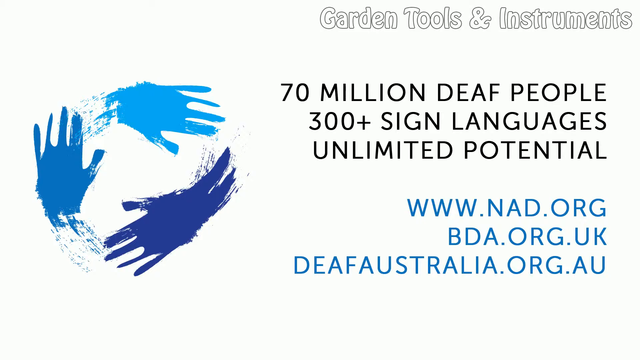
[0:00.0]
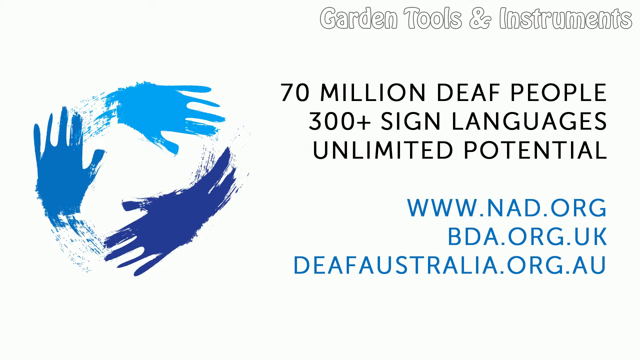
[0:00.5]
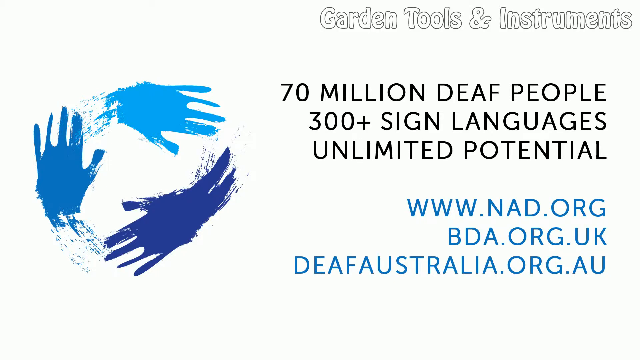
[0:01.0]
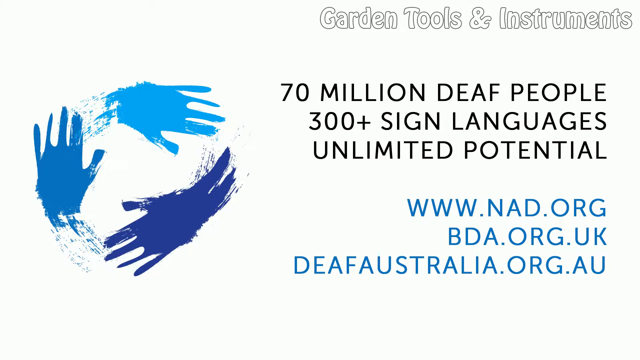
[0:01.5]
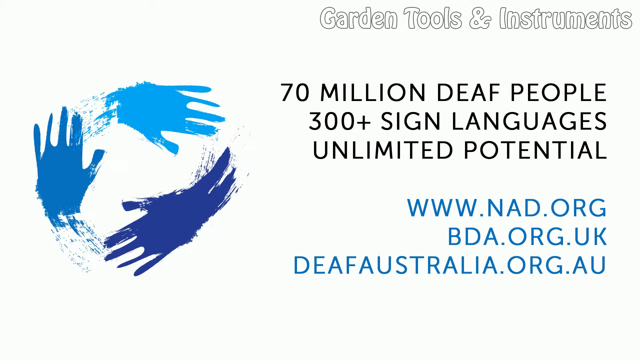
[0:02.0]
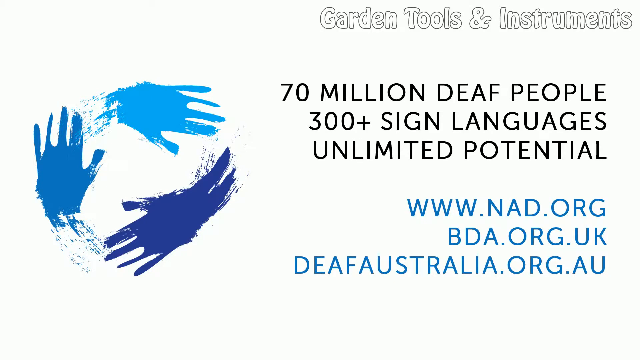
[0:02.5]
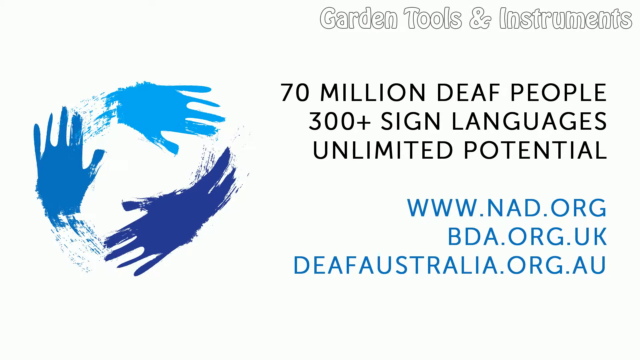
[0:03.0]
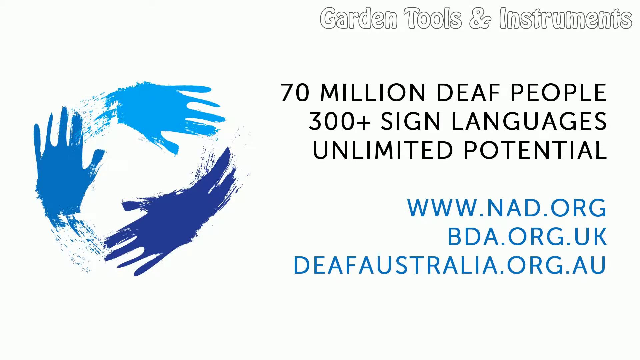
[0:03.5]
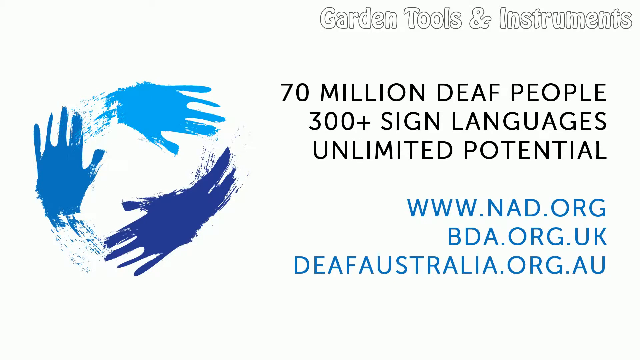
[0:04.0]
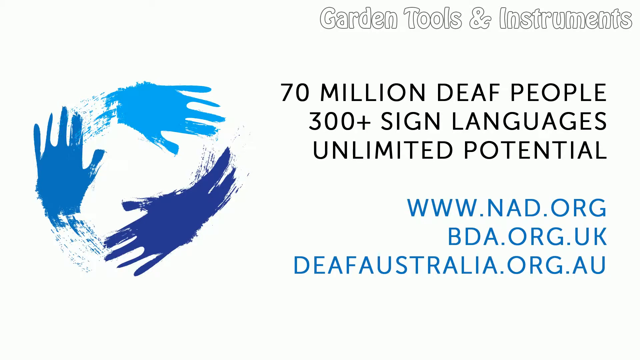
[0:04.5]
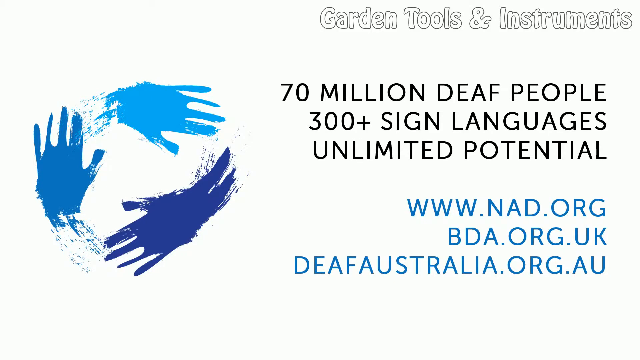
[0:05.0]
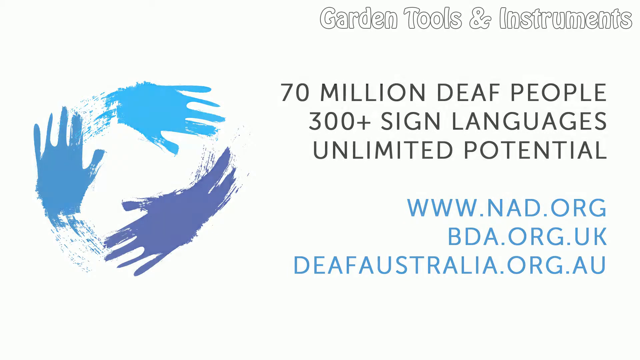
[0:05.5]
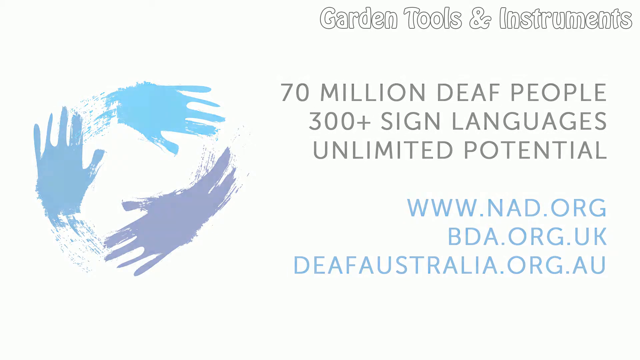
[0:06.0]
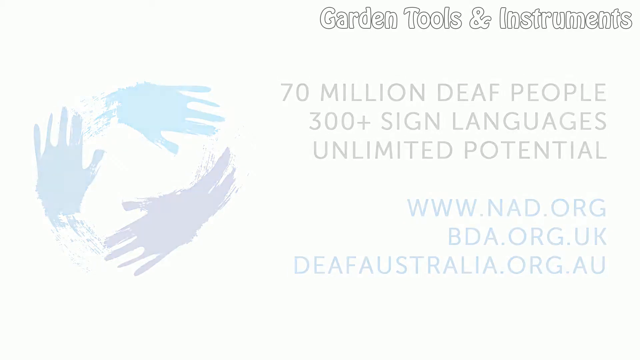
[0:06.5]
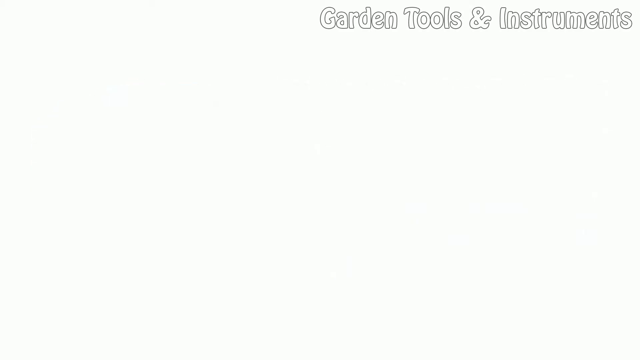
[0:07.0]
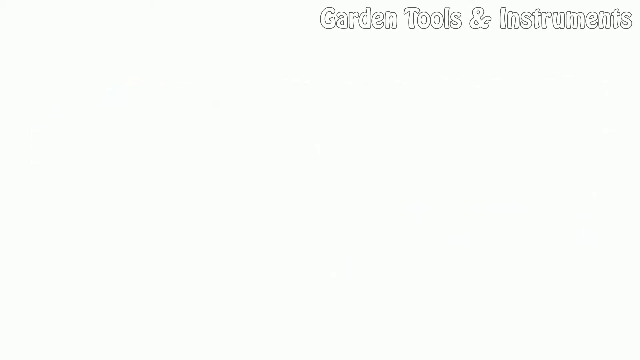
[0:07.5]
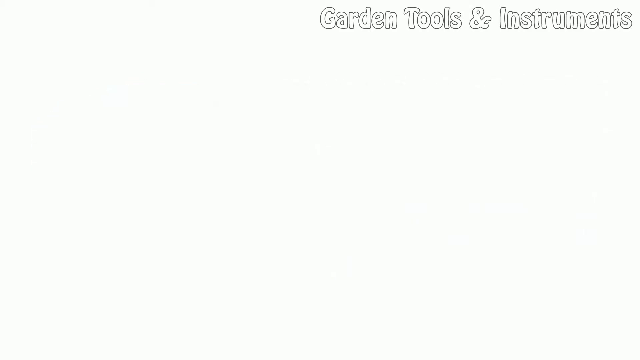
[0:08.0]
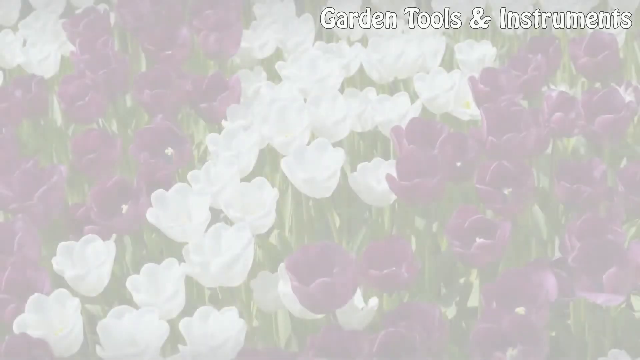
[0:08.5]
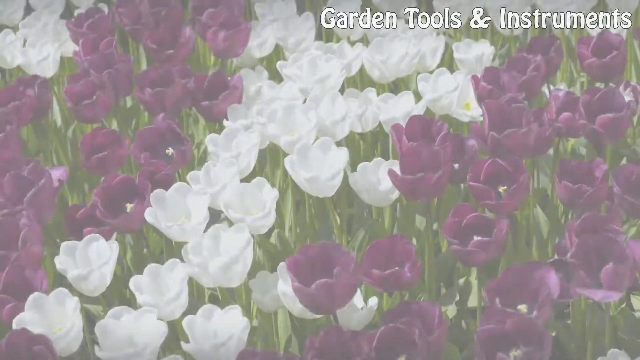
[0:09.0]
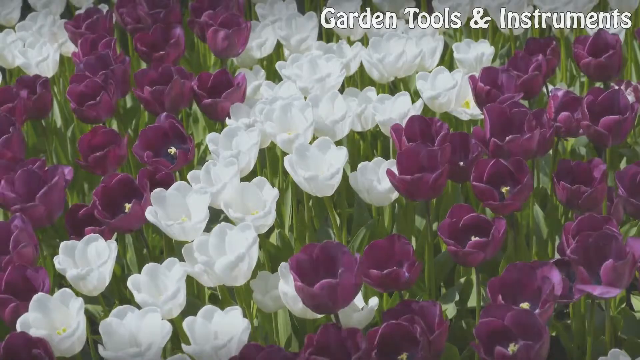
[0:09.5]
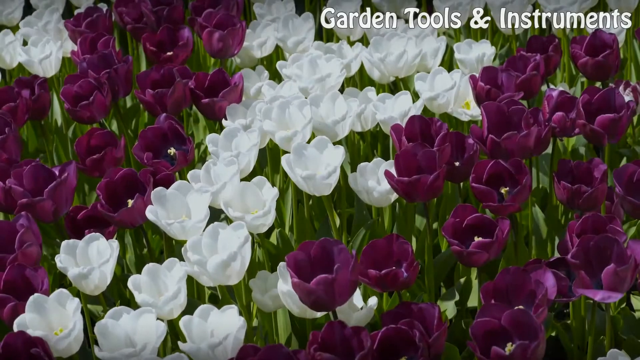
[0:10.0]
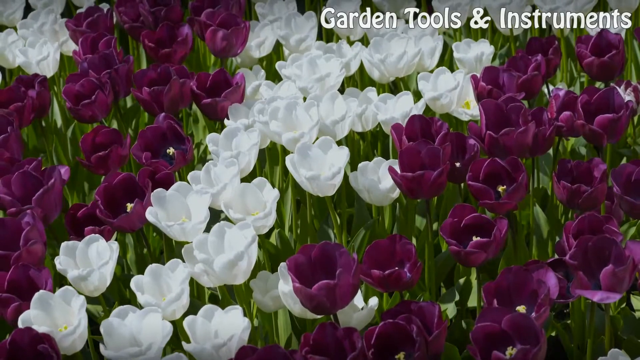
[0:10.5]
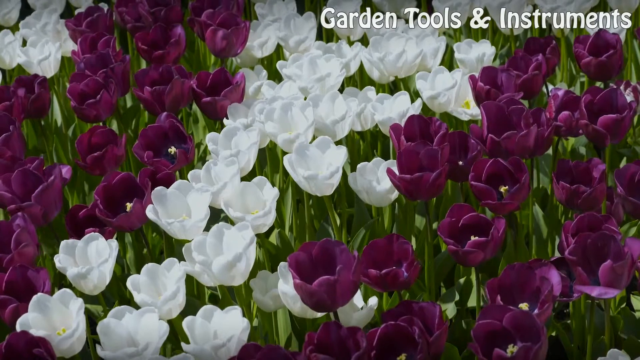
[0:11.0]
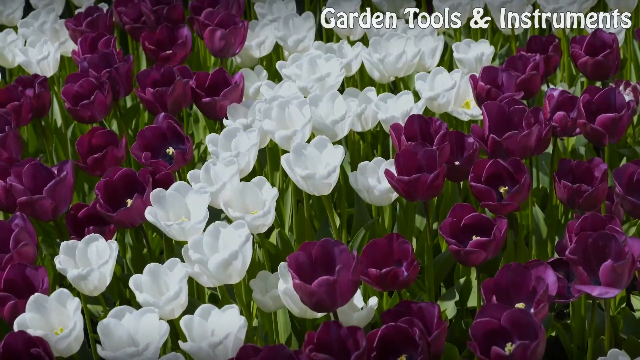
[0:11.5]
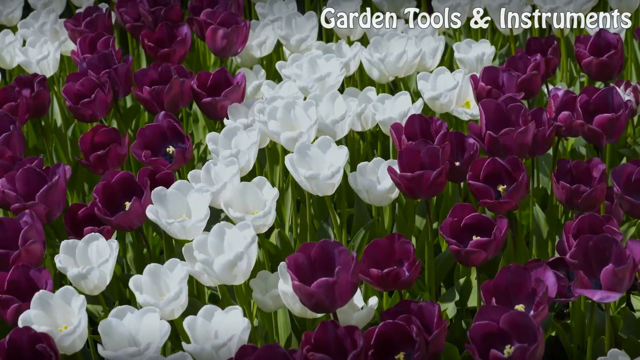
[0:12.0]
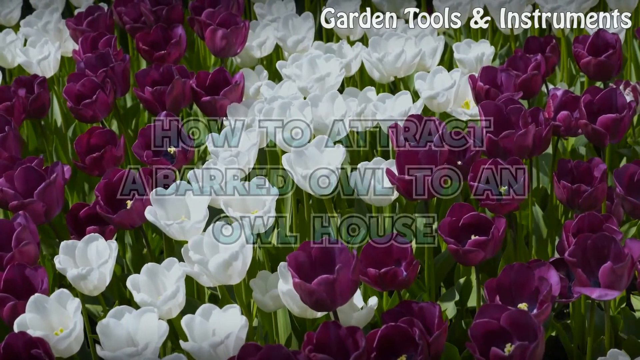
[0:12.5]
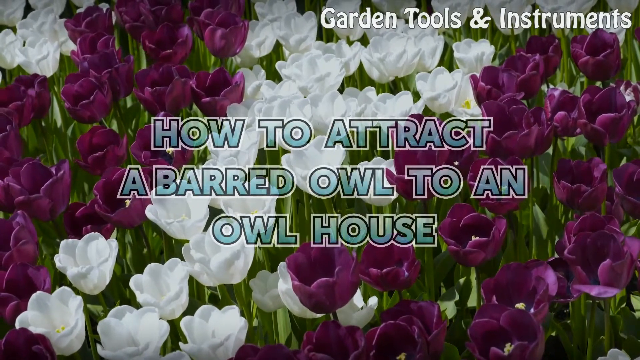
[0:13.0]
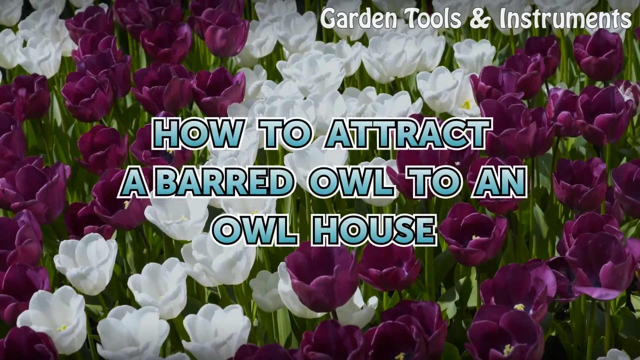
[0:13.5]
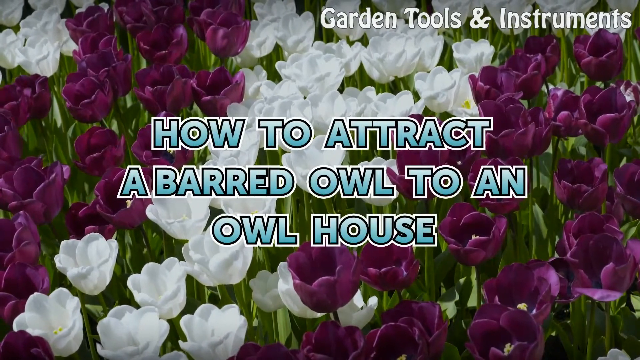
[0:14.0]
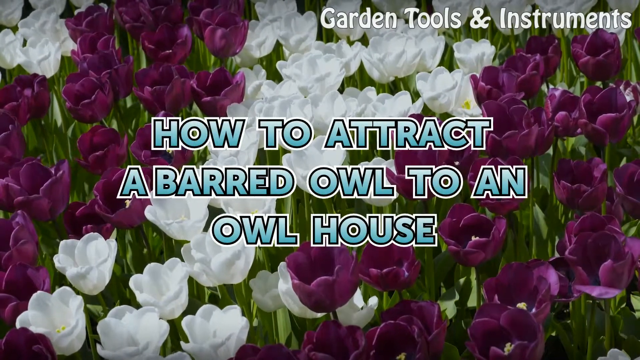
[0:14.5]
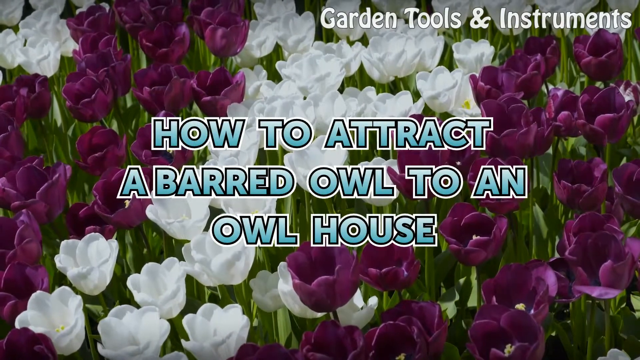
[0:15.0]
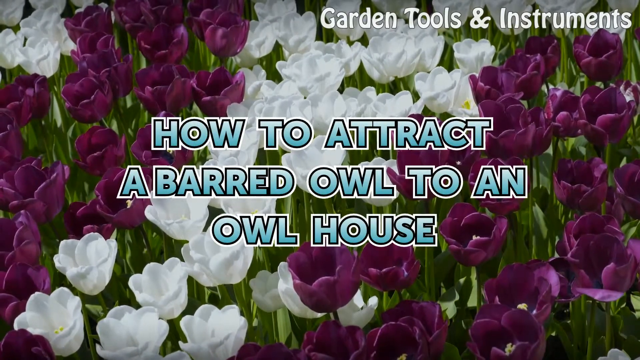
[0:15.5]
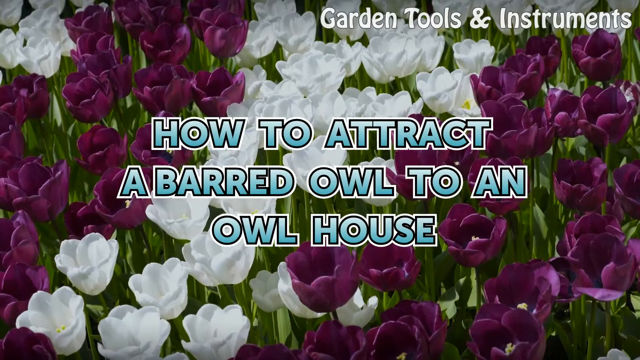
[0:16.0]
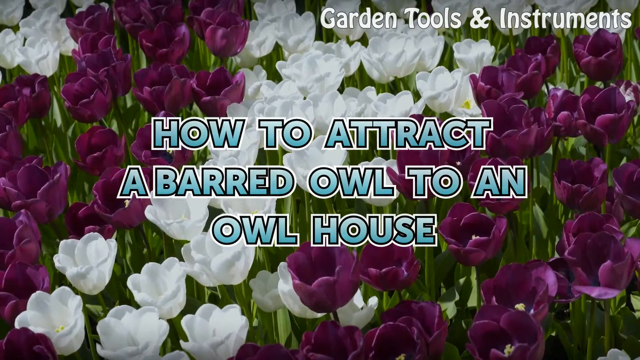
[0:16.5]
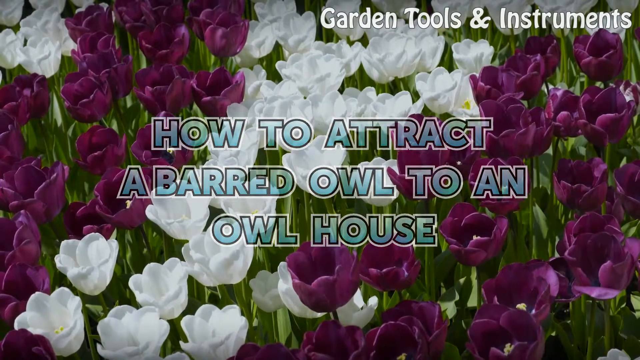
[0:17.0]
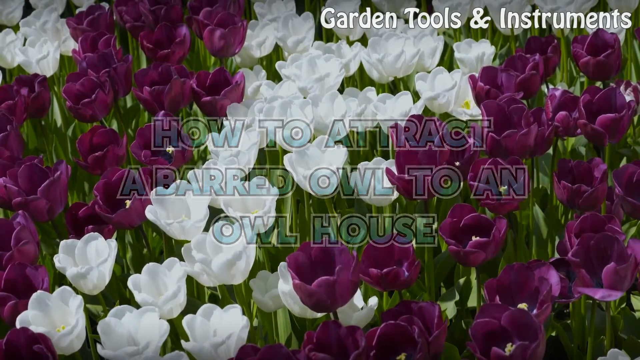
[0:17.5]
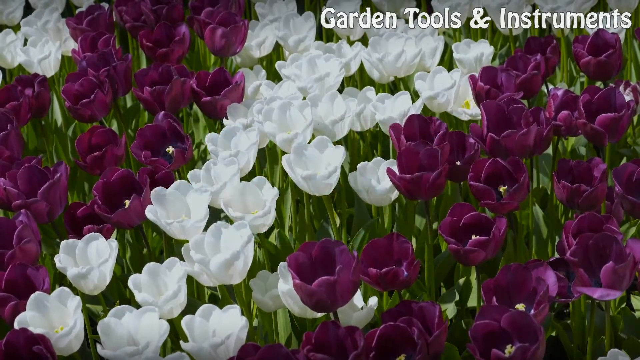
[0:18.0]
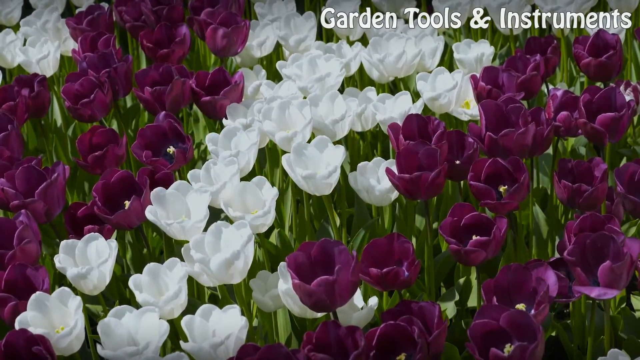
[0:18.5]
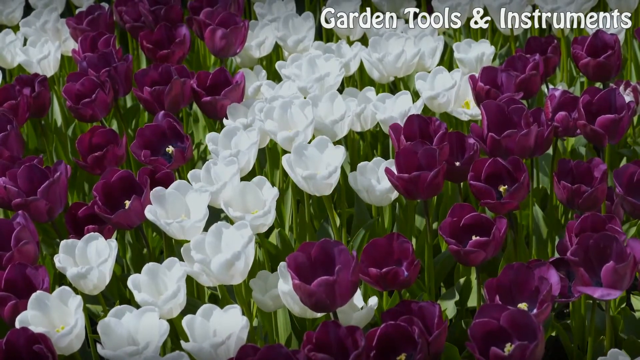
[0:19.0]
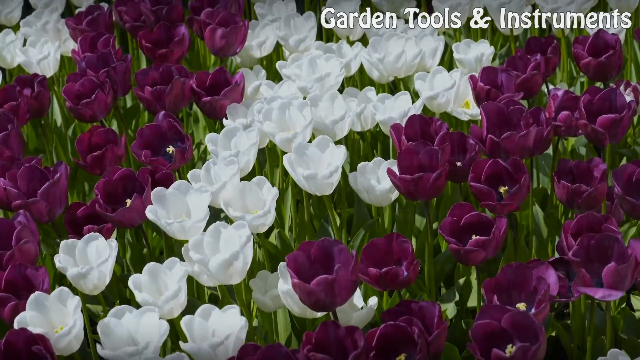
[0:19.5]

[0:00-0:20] The video opens on a white background with "garden tools and instruments" written in white bubble letters in the top right corner. On the left side of the screen are three hand prints that look like they were dipped in paint, in different shades of blue, going around in a circle. To the right of them, black text reads "70 million deaf people, 300+ sign languages, unlimited potential." Underneath, blue text reads "www.nad.org and bda.org.uk and deafaustralia.org.au." The screen then changes to a close-up of an area with many purple and white flowers on long, skinny green stems, their petals pointing upward somewhat like a tulip's. Light blue text over the middle of the screen reads "how to attract a barred owl to an owl house."